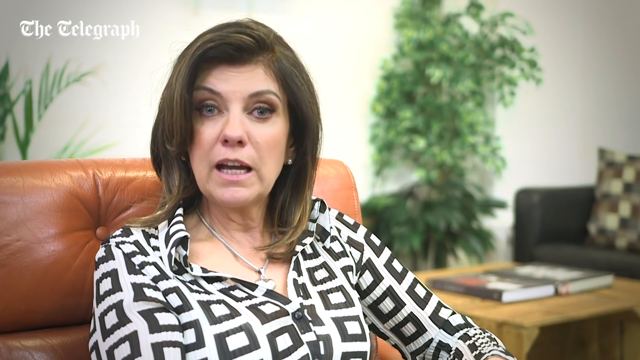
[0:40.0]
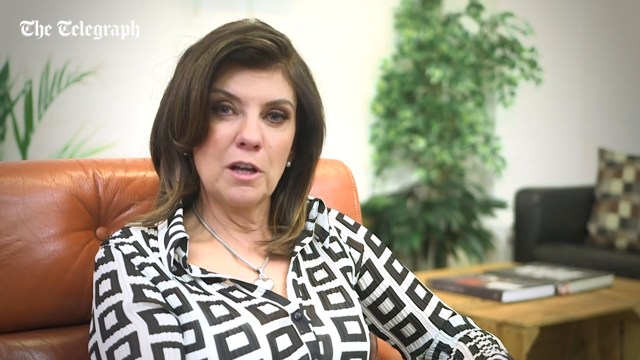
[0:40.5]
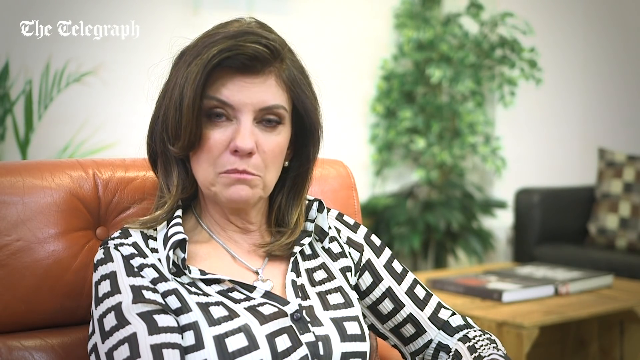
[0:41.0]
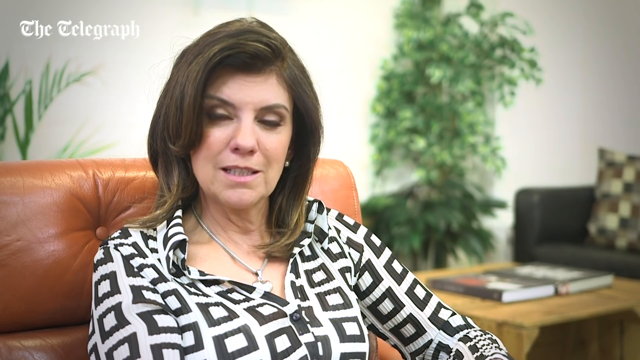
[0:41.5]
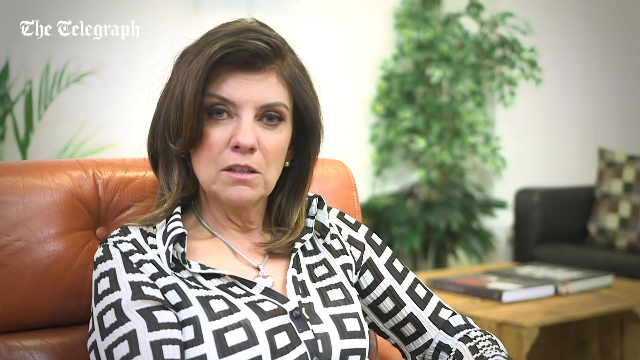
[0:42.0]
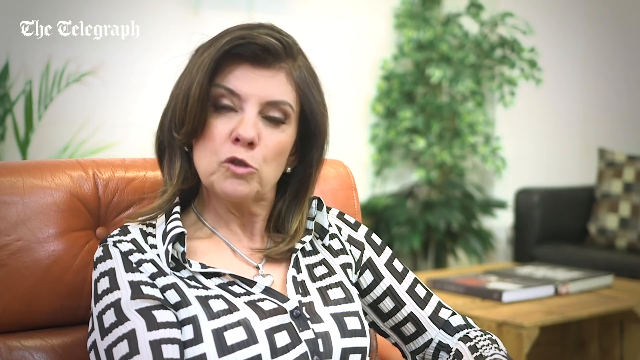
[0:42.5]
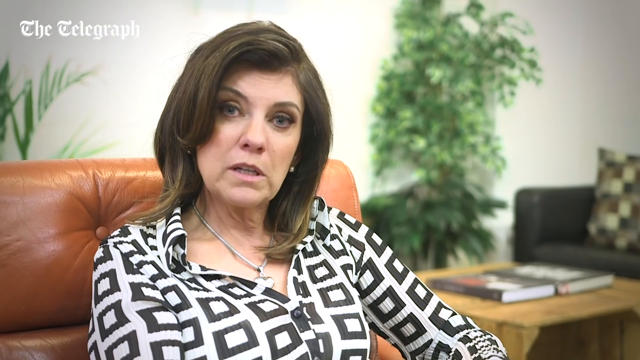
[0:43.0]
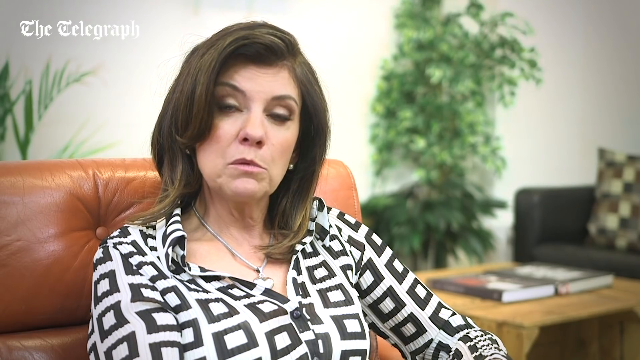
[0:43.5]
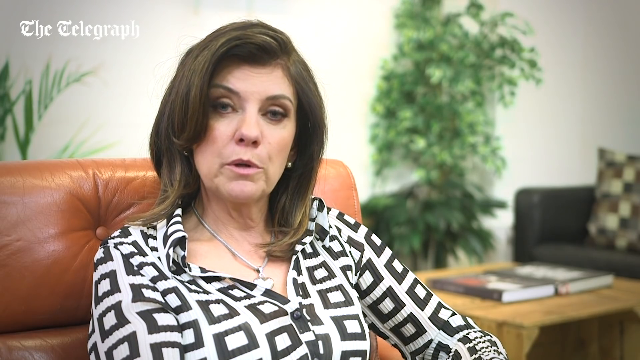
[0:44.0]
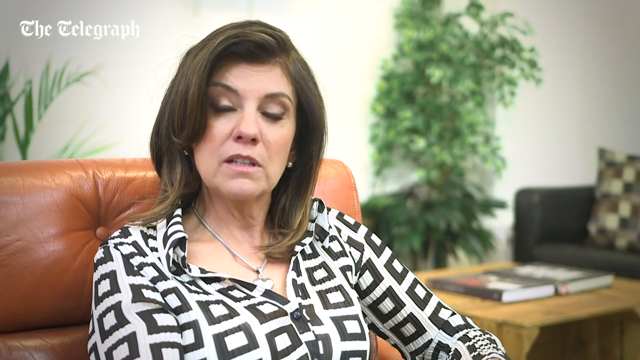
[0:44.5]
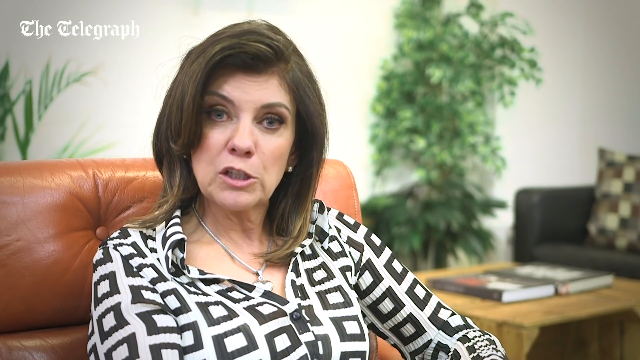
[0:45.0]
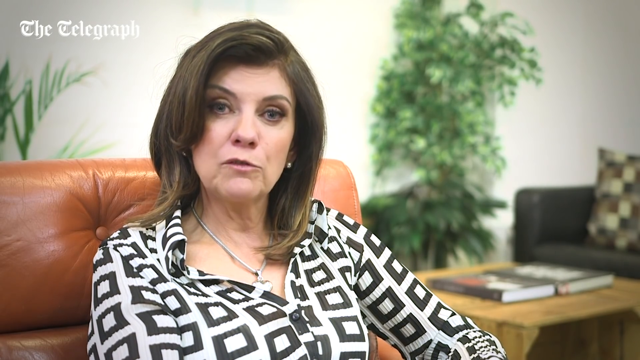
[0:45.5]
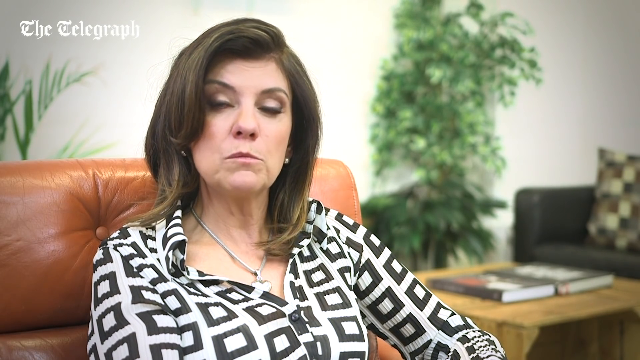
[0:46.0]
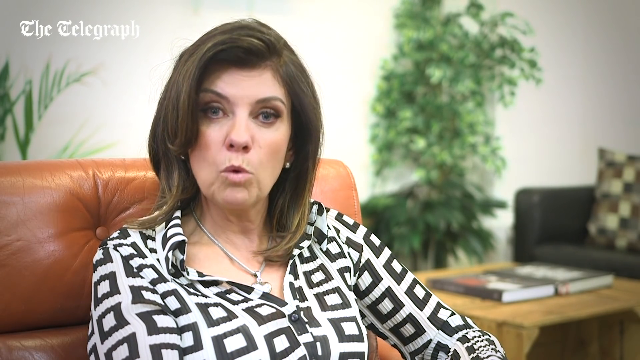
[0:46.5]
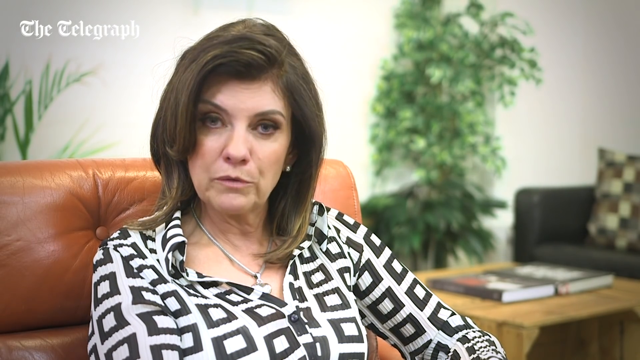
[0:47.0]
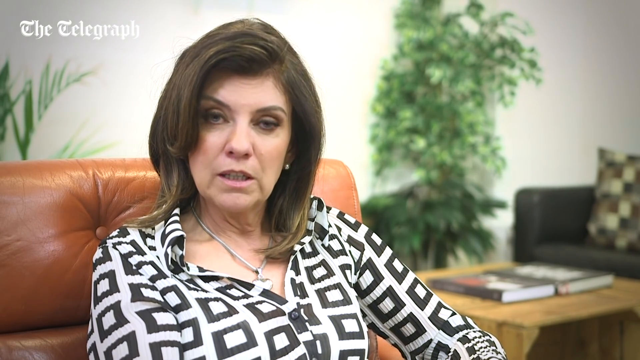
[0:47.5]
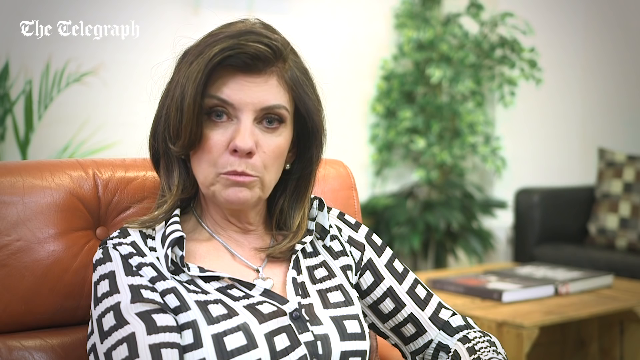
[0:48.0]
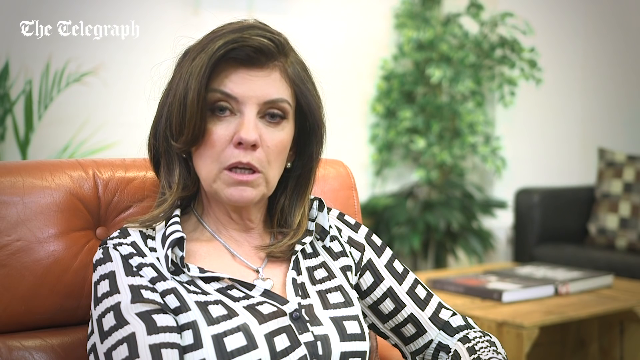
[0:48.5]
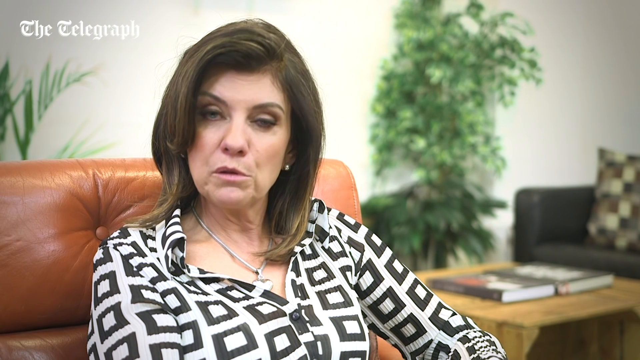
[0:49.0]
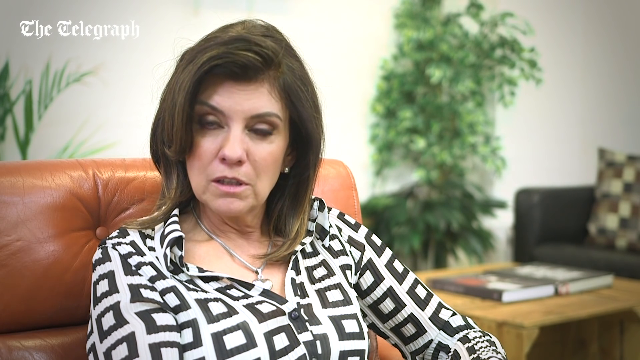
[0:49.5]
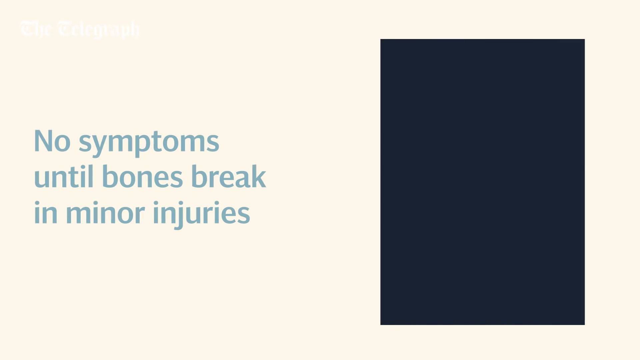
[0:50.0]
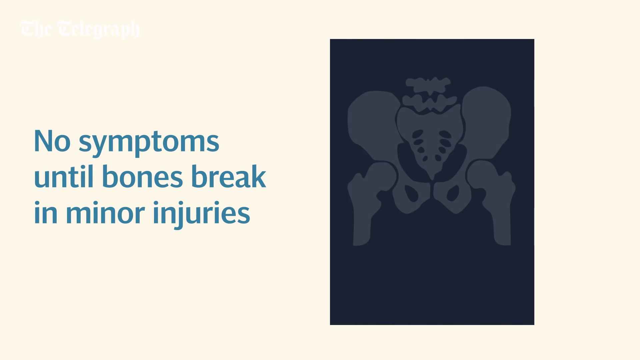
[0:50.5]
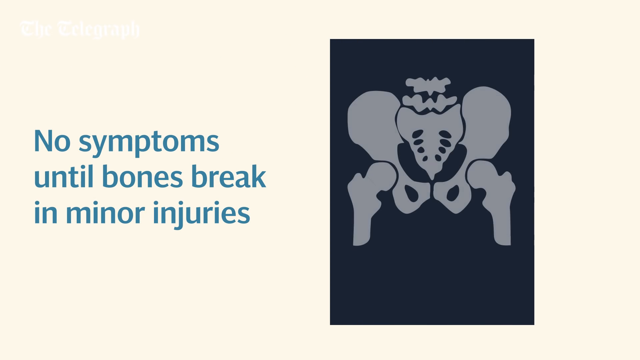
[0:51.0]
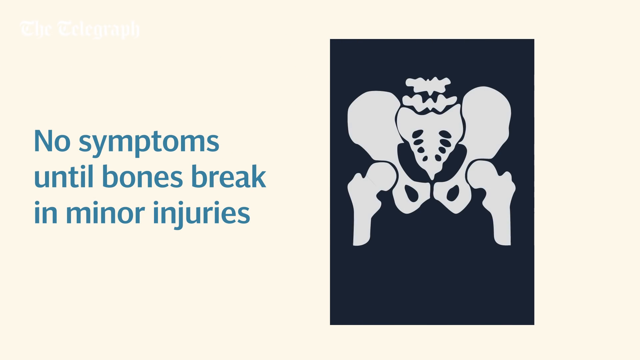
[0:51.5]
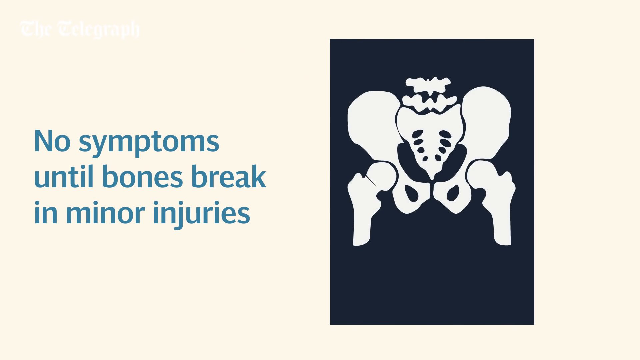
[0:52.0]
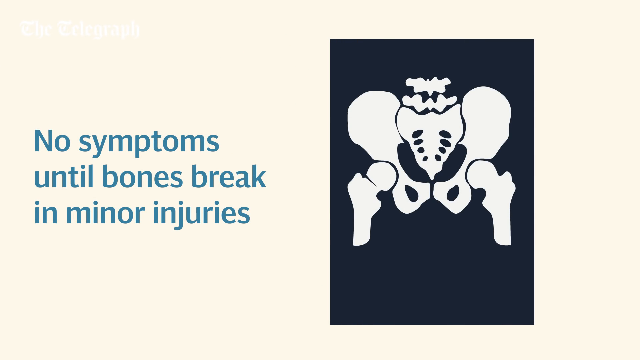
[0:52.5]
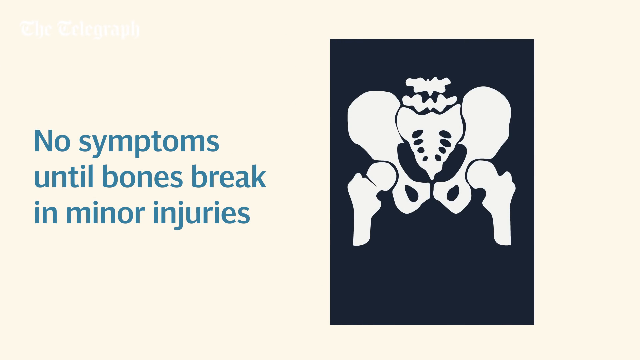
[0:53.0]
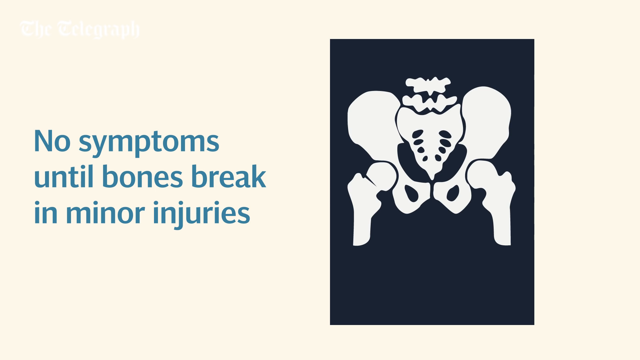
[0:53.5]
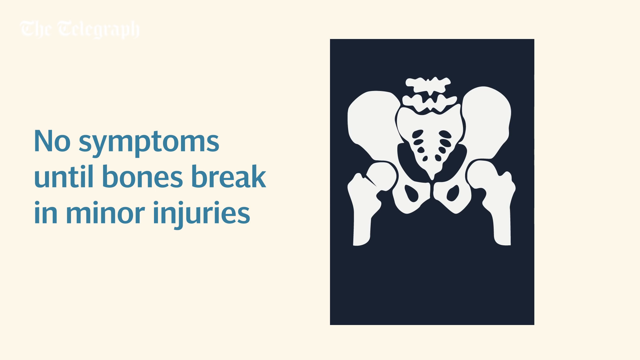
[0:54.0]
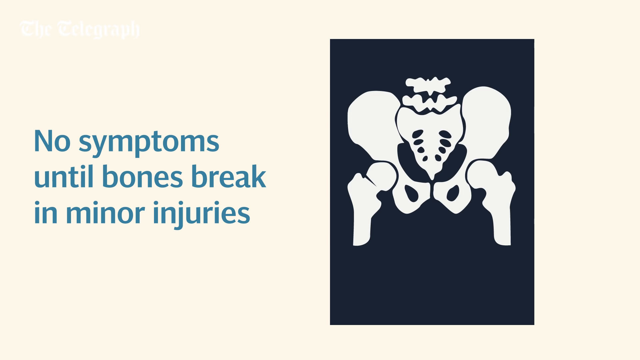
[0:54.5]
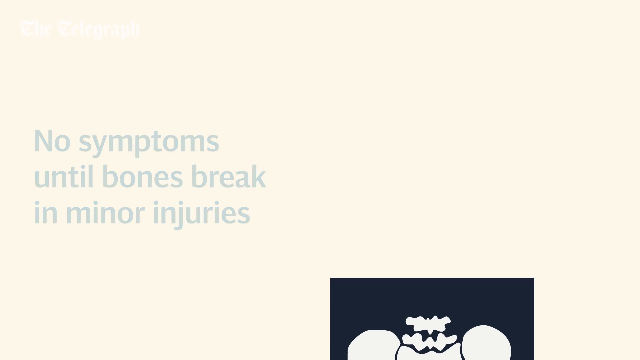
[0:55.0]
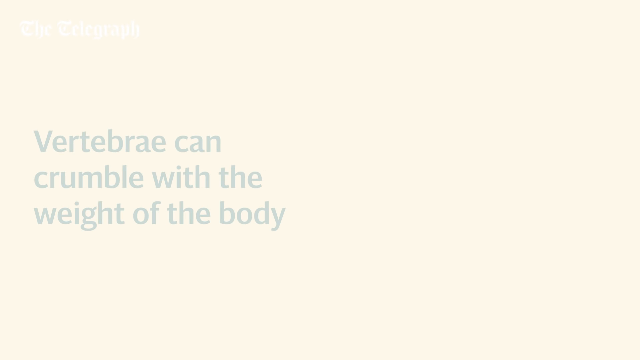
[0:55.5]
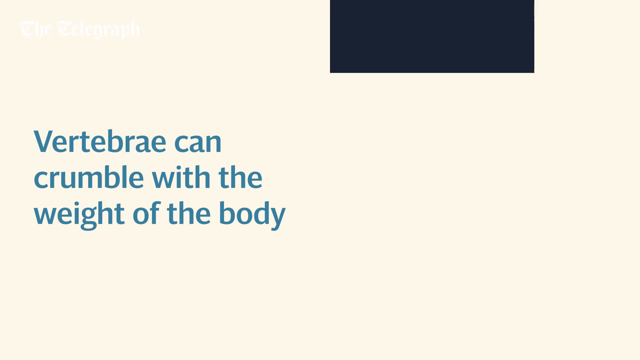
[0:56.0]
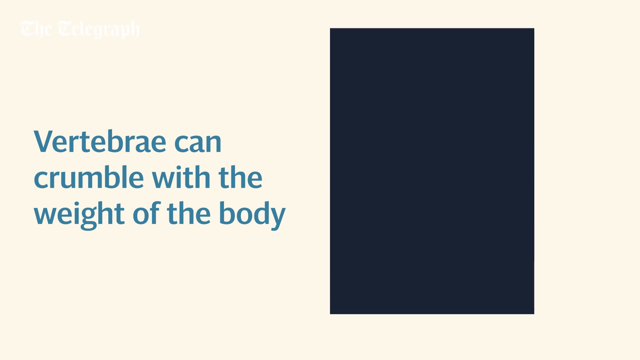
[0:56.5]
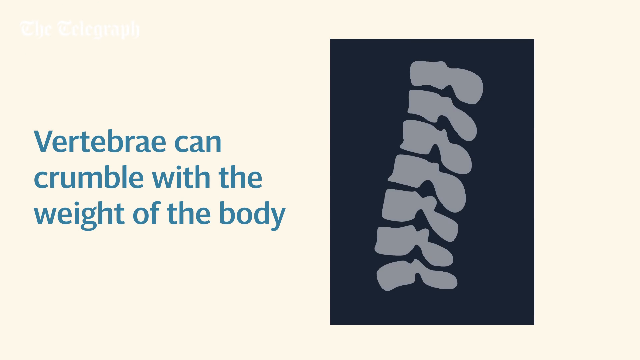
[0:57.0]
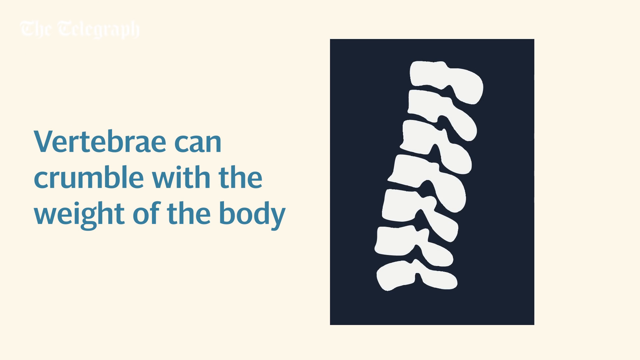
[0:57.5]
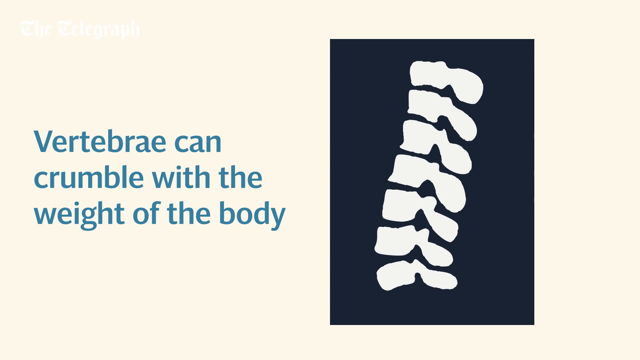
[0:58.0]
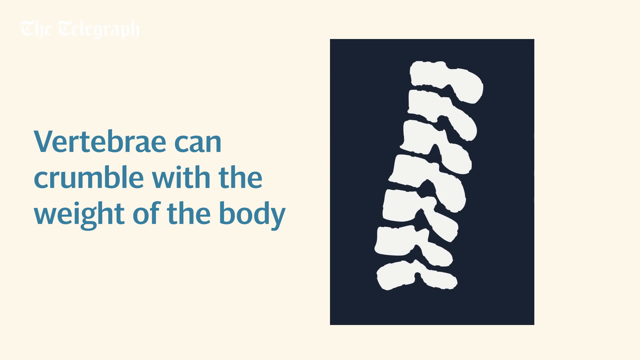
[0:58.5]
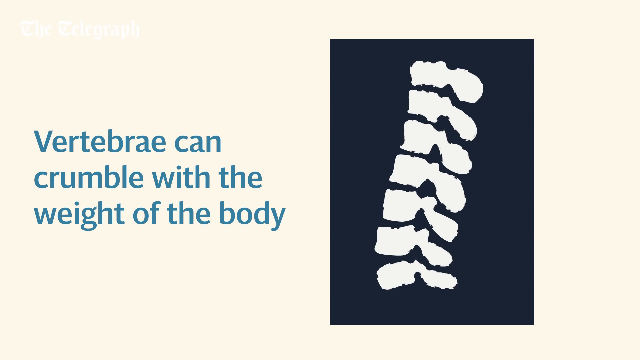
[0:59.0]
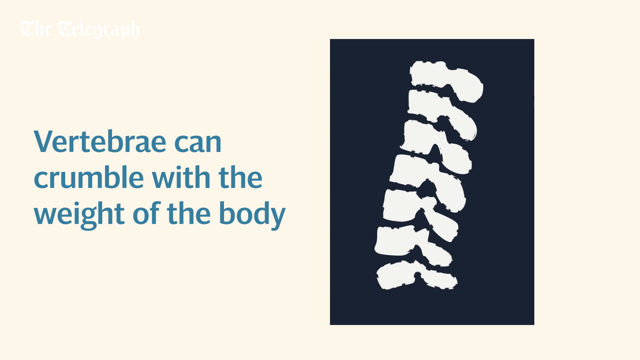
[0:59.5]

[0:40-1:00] The doctor is now shown more zoomed in, with only her head and shoulders visible. She looks directly into the camera and speaks, seemingly quite slowly. The cream background returns, with blue text on the left-hand side reading "no symptoms until bones break in minor injuries". A dark navy box shoots in from the right-hand side of the screen to the centre right, containing a picture of the pelvis area with the bones outlined; it moves to the bottom of the screen and disappears. Blue text appears on the left reading "vertebrae can crumble with the weight of the body", and a navy box appears again, this time with an illustration that looks like the spine.